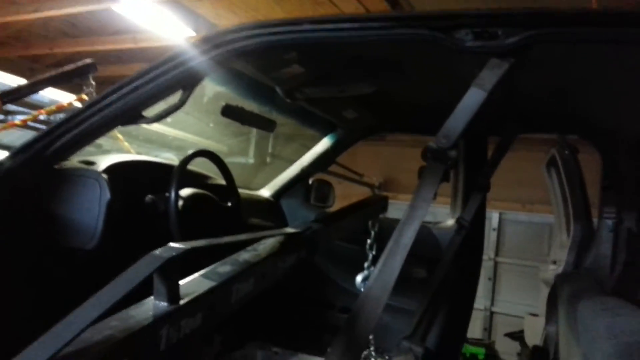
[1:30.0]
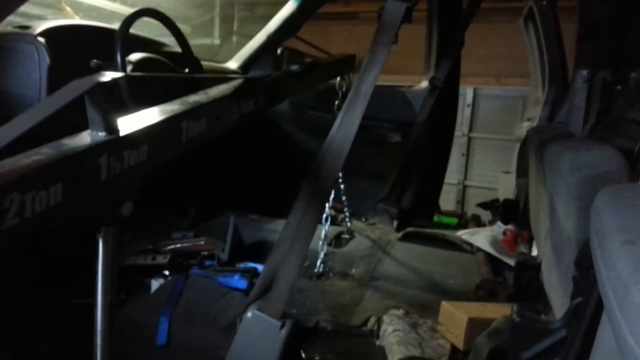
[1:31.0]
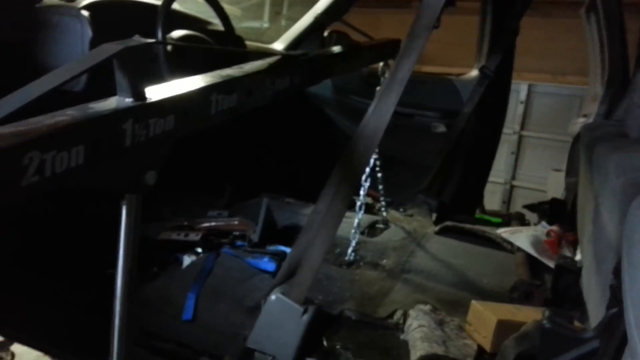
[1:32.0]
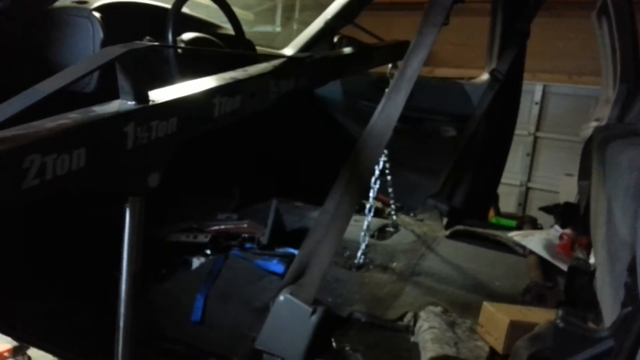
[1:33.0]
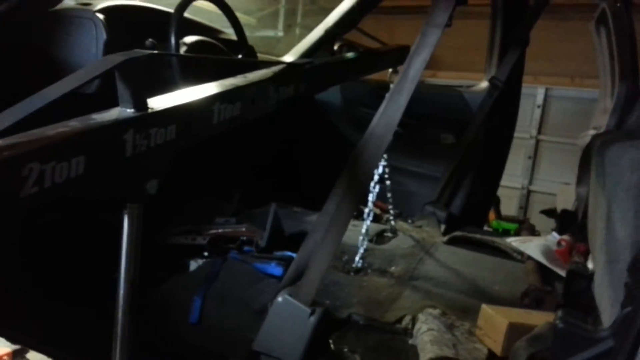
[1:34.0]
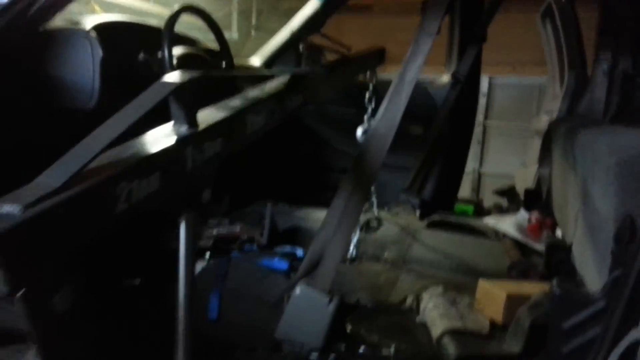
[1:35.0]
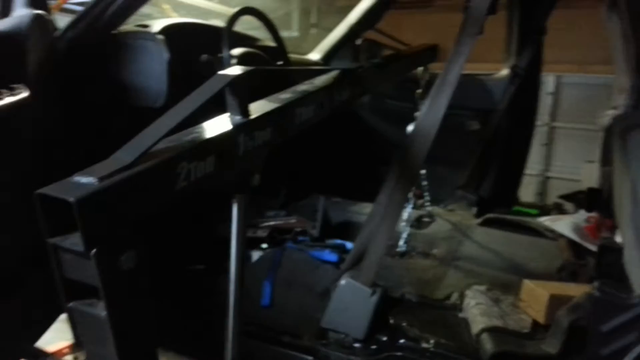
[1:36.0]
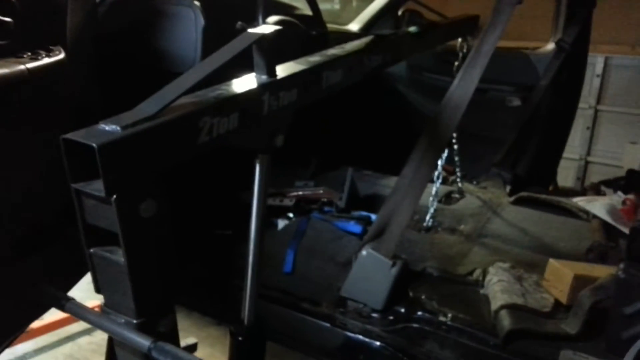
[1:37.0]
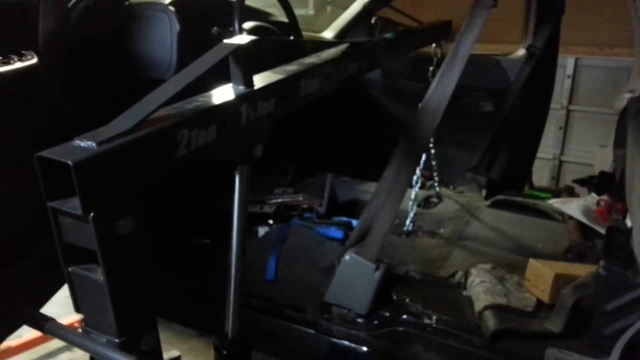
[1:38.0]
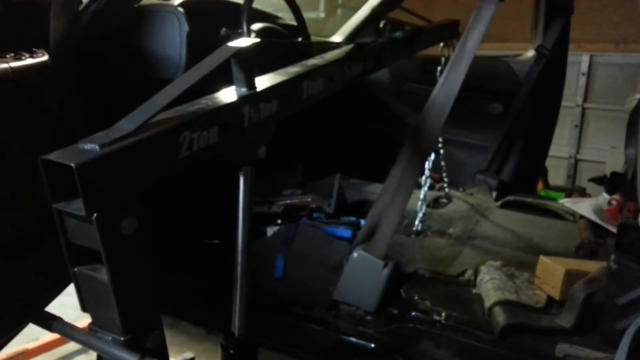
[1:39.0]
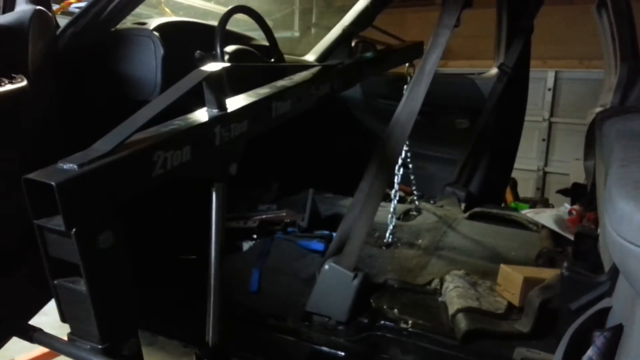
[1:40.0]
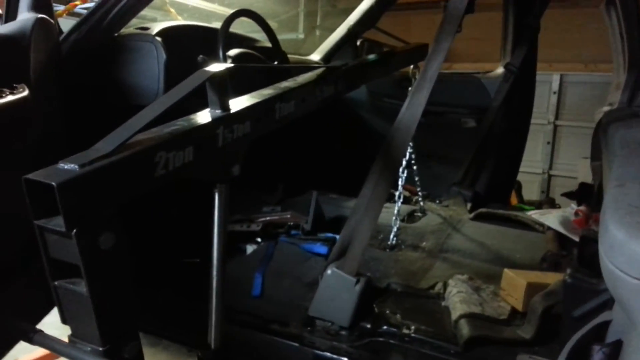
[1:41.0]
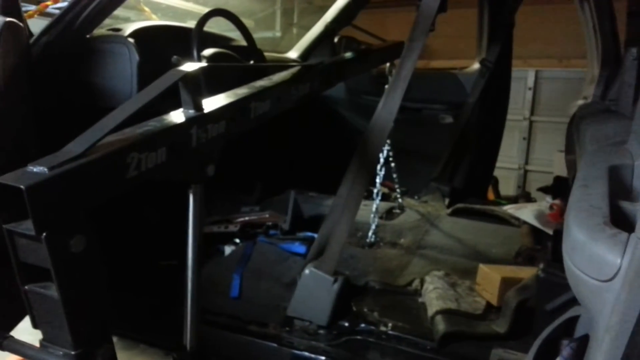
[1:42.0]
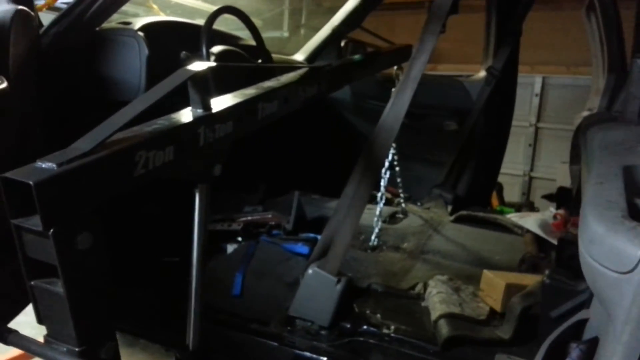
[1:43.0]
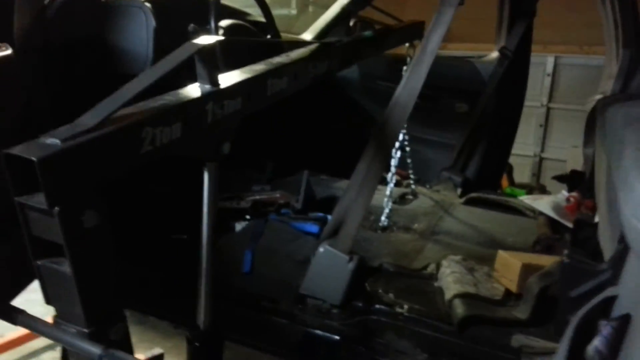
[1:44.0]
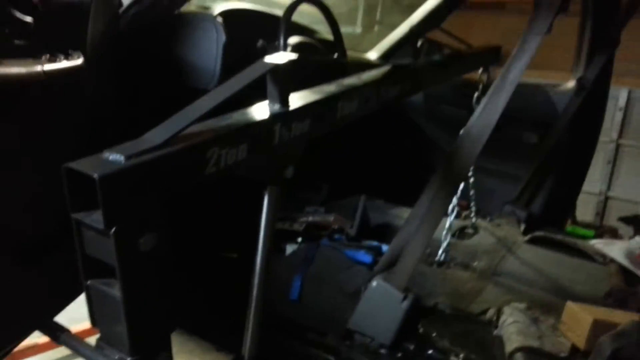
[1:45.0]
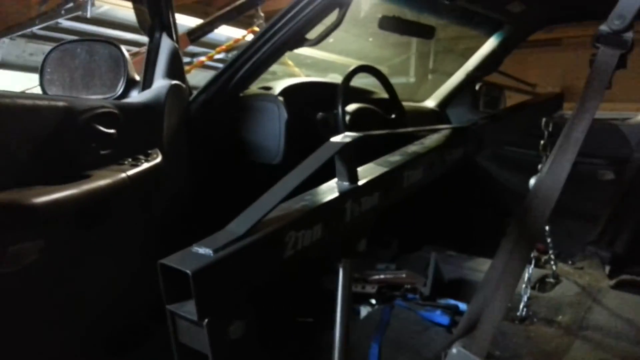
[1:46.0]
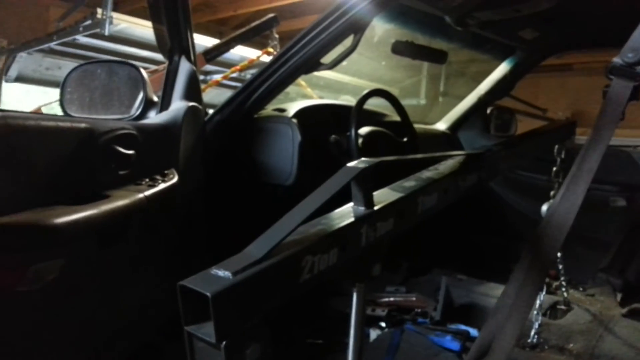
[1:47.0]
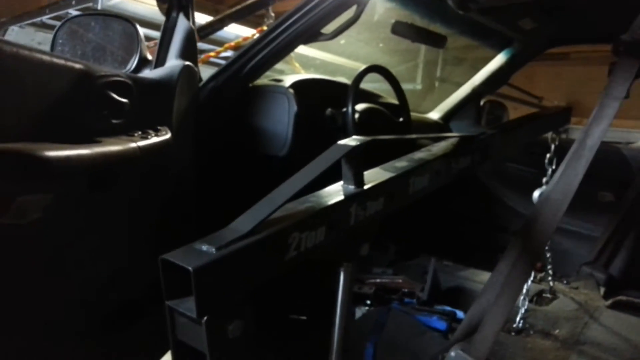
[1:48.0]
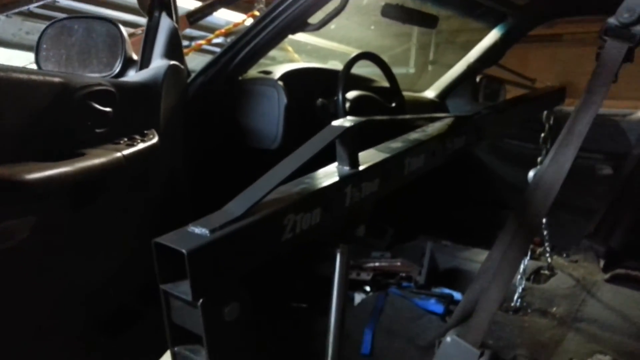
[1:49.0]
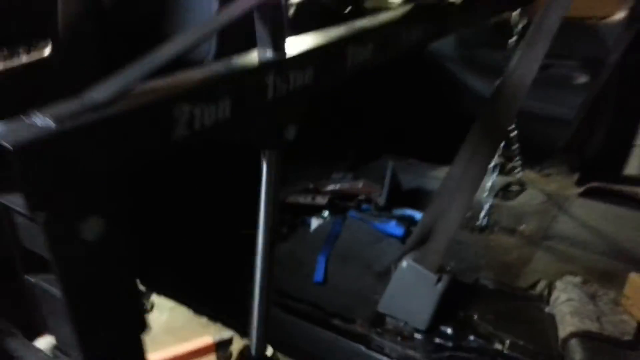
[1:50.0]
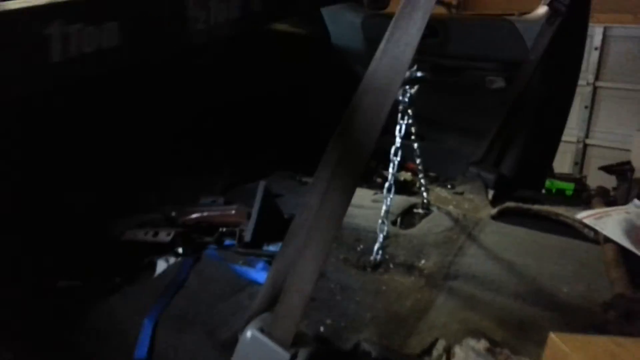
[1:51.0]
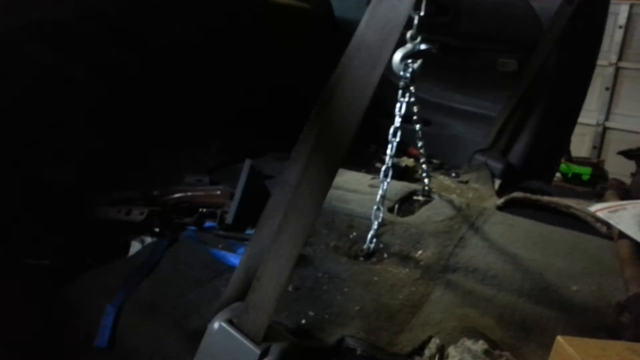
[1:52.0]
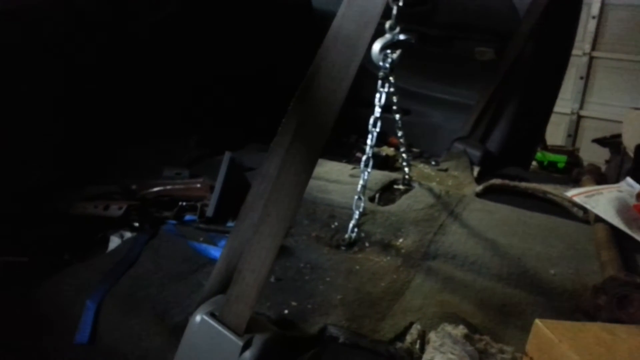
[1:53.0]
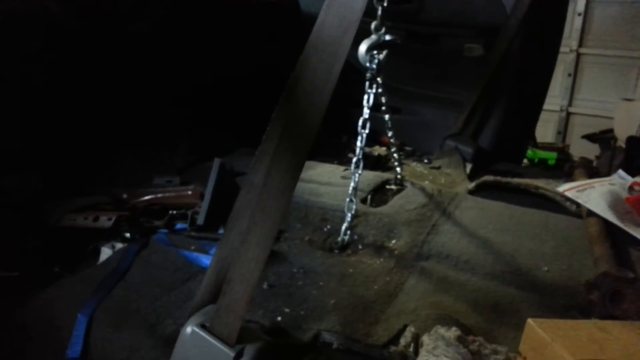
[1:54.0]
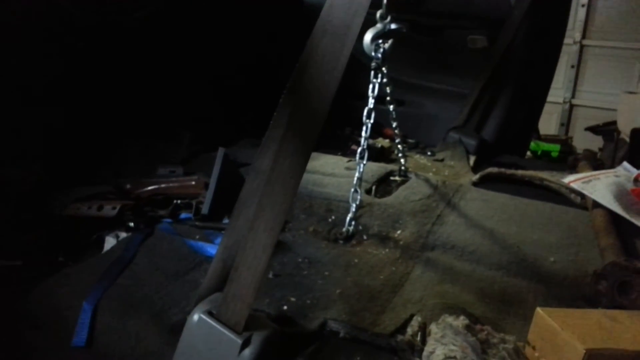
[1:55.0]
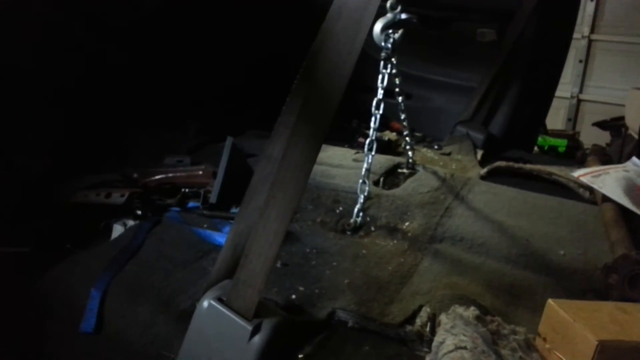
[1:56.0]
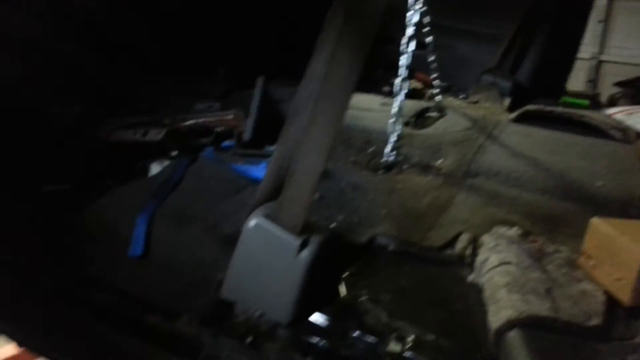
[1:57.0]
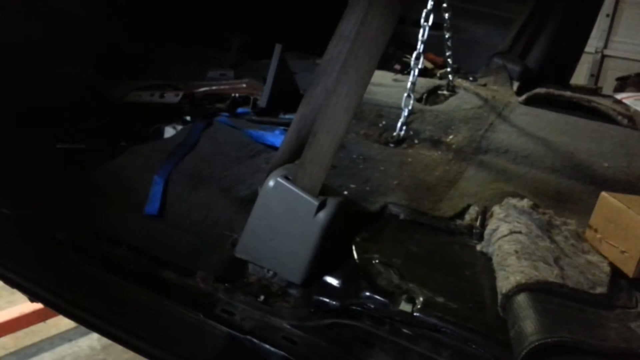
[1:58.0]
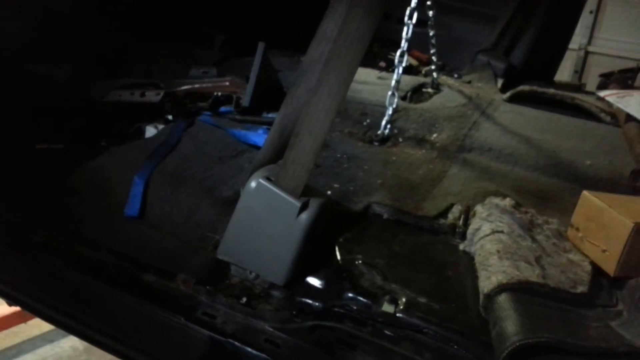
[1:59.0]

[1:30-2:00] The camera shifts down toward the floor again. Another beam runs inside as an extra bar along the top, and this seems to be where the chain is attached with the hook; the hook is attached to the beam, helping support the center of the vehicle. The camera moves toward the left, where the first open door is, showing inside it, before zooming in on the chain in the center of the floor again. On either side of the chain is a somewhat light brown stain. The camera then shifts further toward the floor, showing a box in the lower right corner, a white object, and a black object mostly hidden in shadow. On the left side of the floor is something bright blue that is very difficult to identify.